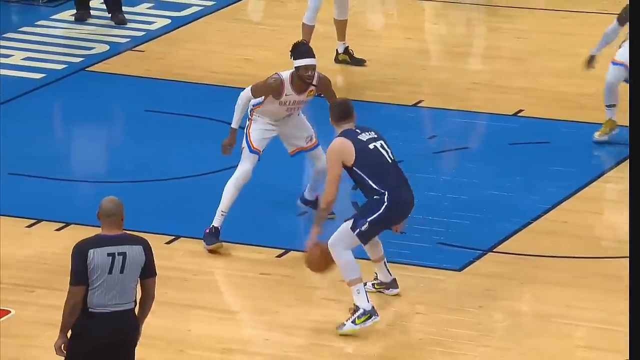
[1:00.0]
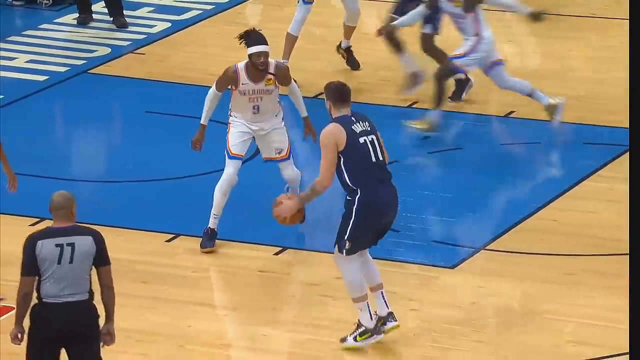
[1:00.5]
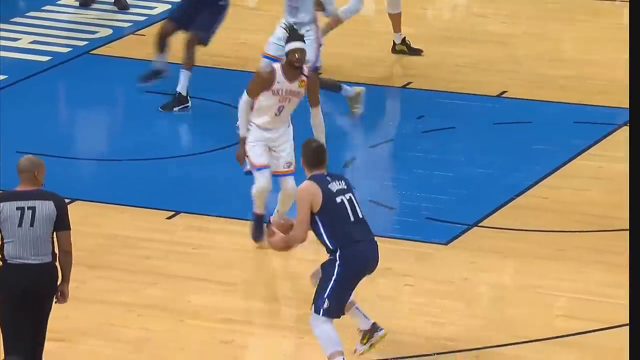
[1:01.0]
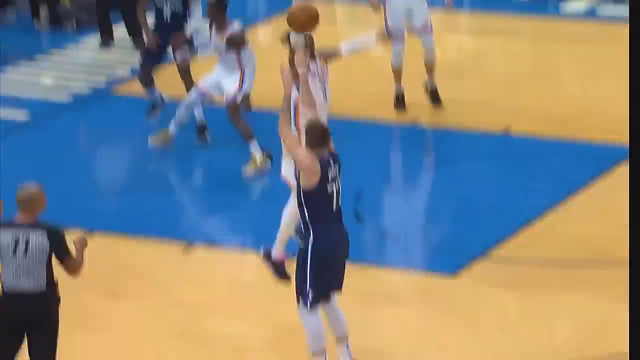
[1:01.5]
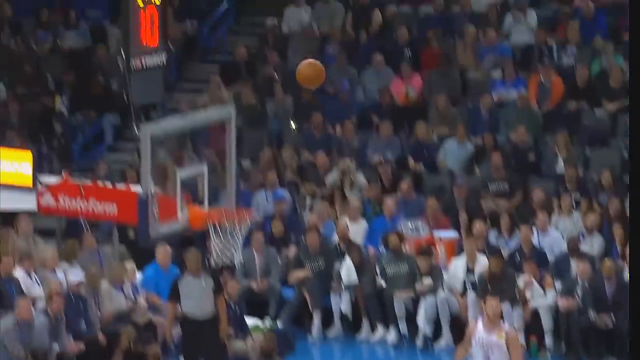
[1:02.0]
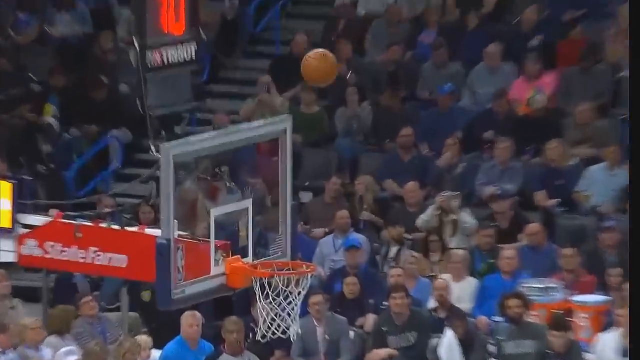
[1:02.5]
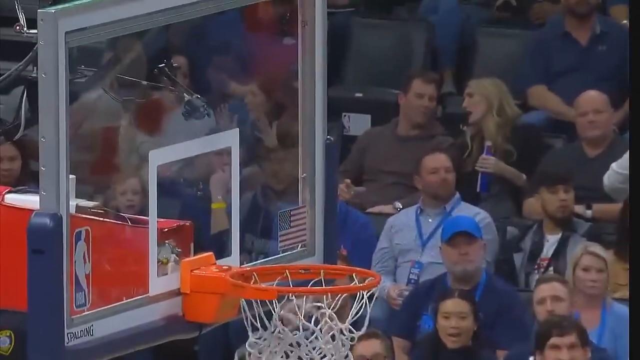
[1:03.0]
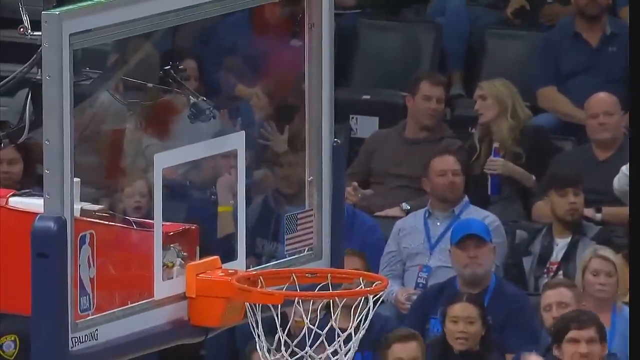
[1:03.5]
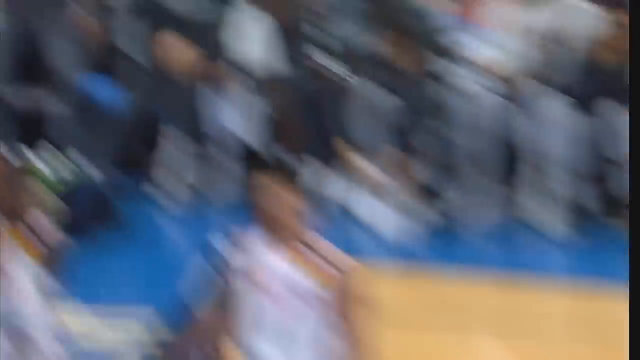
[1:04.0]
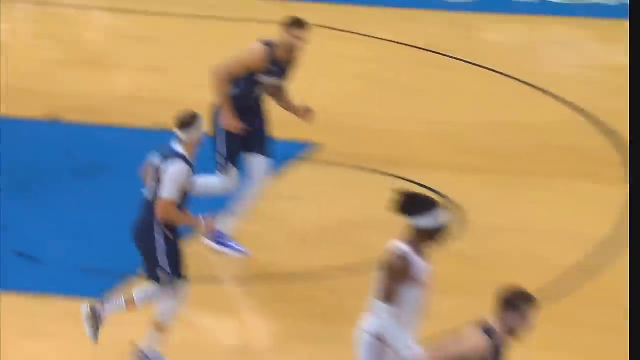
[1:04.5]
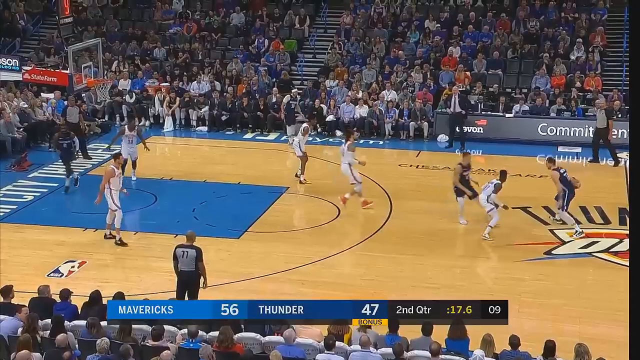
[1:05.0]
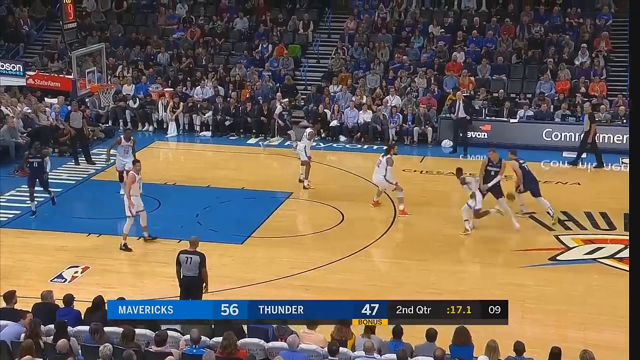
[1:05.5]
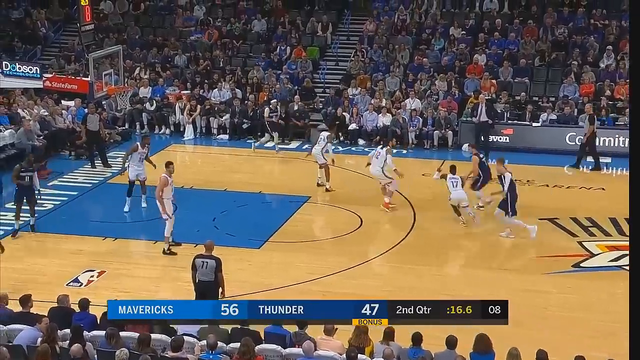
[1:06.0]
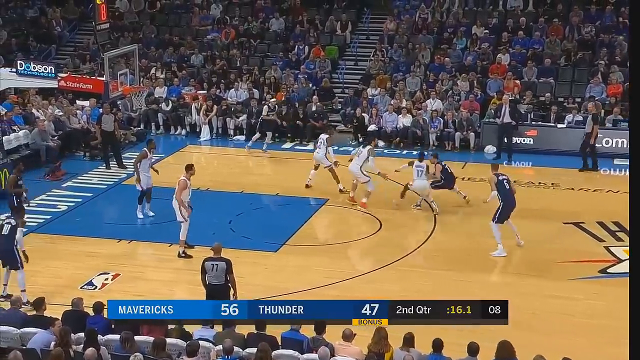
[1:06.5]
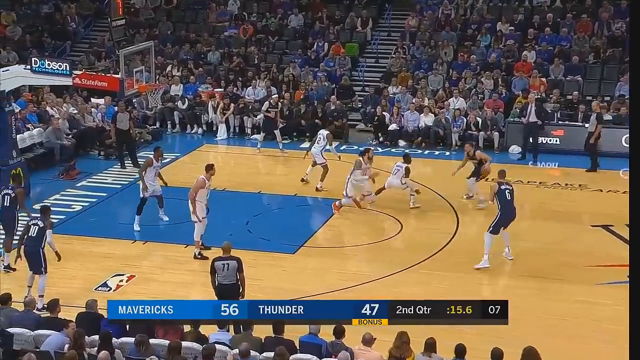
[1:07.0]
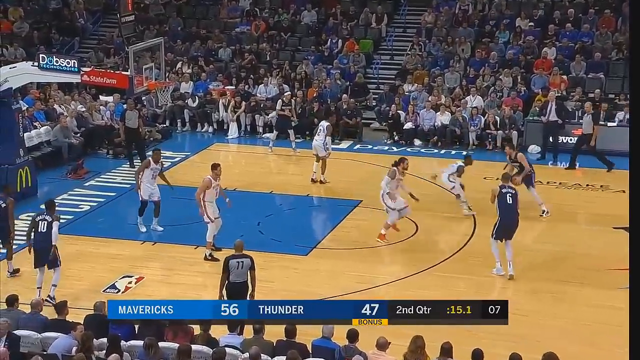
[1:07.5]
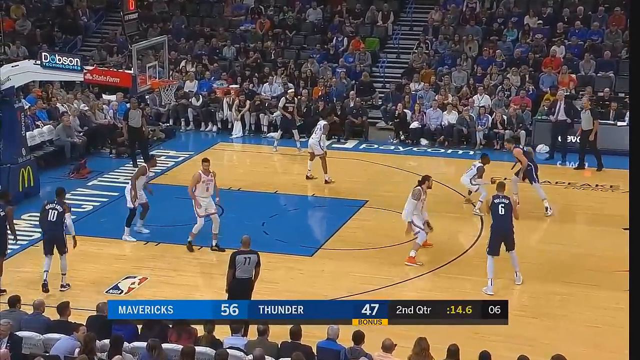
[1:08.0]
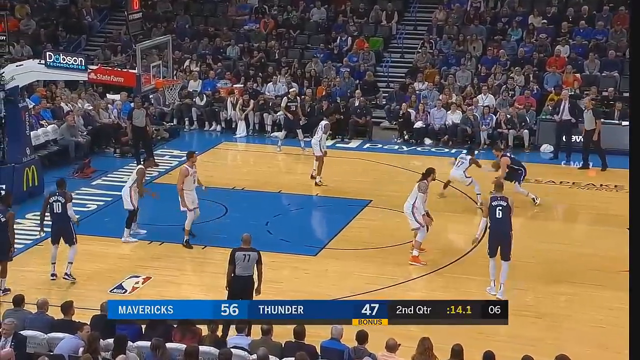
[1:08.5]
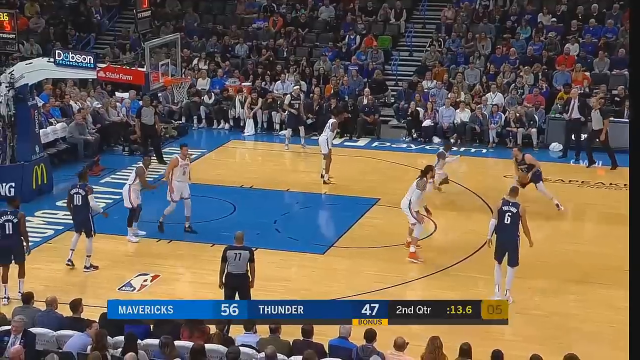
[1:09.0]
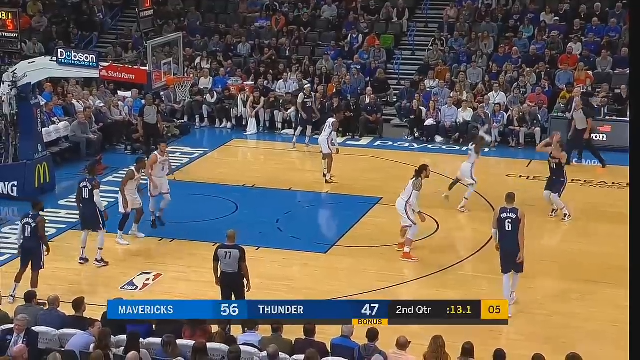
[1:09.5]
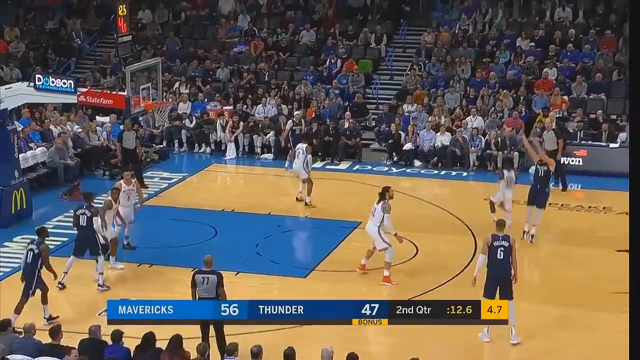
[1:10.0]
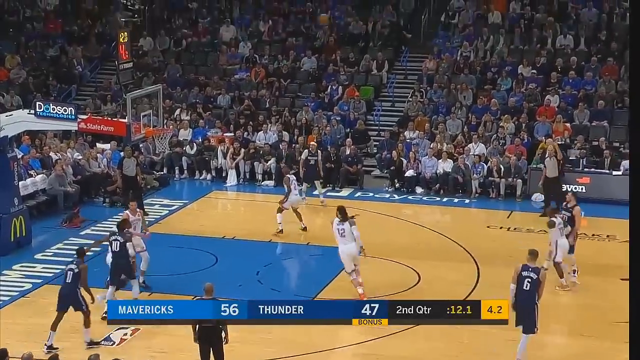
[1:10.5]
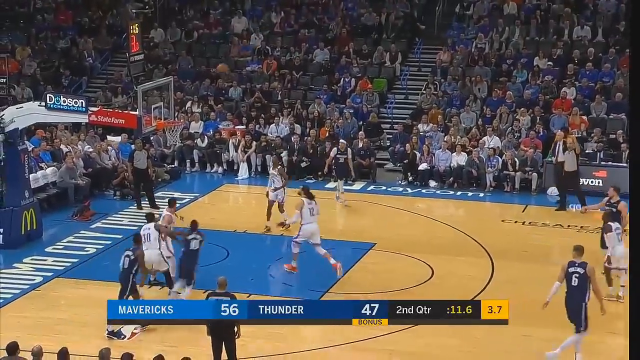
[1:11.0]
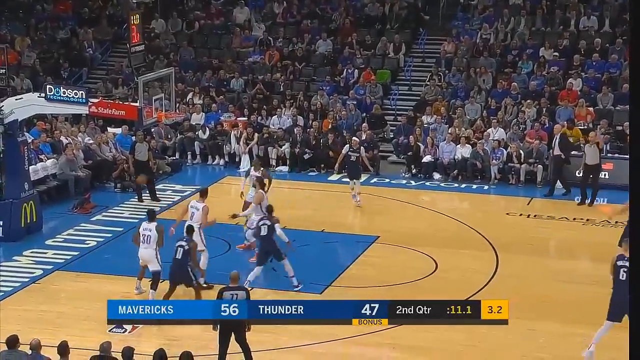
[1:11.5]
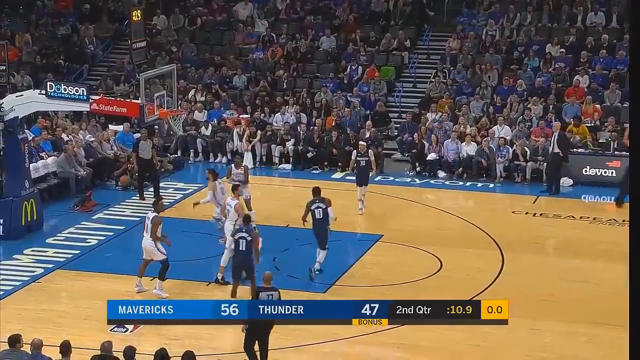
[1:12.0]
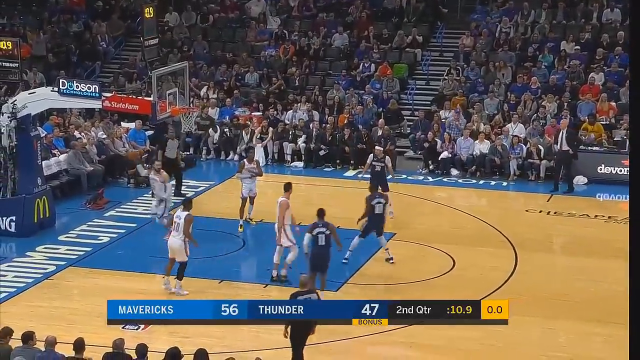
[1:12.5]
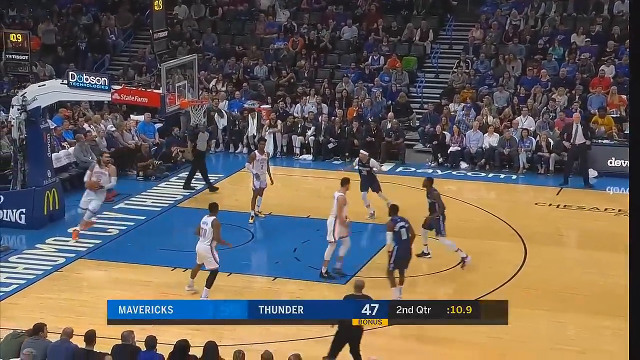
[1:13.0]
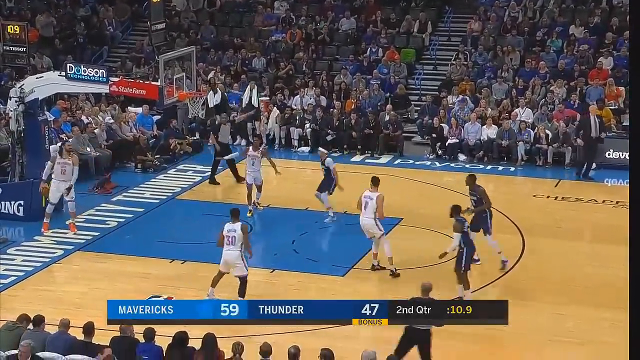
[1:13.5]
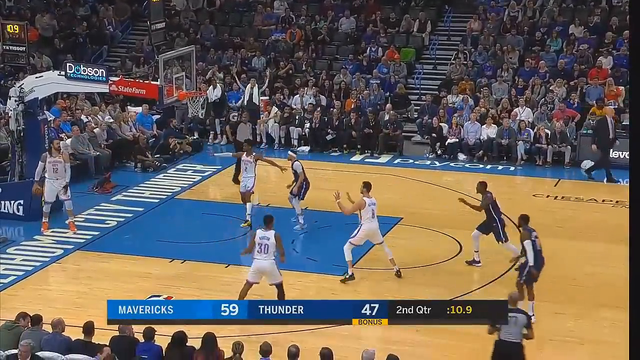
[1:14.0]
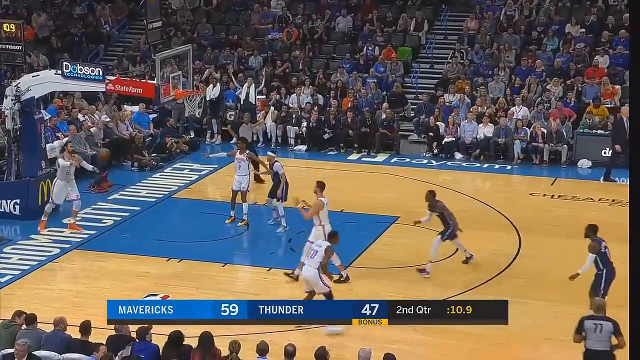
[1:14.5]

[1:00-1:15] Doncic makes a three-point shot, and then, as the clock is about to expire in the second quarter, he is behind the three-point line again and makes another three-point shot from quite a bit beyond the line, with about 10 seconds left on the clock. The score updates to 59-47 in favor of the Mavericks. One of his shots is shown again in a slow-motion replay. Some of the fans clap when he makes a shot. There appears to be a bit more urgency from some of the Oklahoma City players trying to guard Doncic as he moves into position to shoot; one guard in particular appears quite a bit shorter but is trying very hard to prevent baskets.